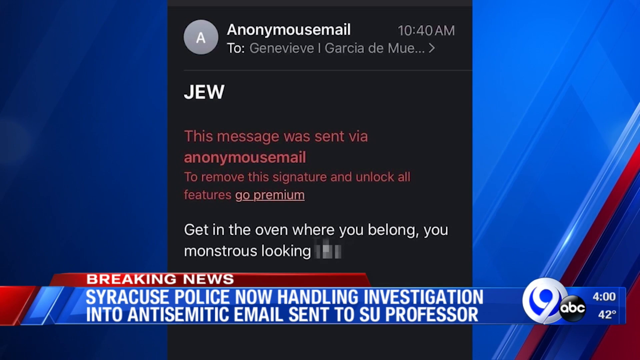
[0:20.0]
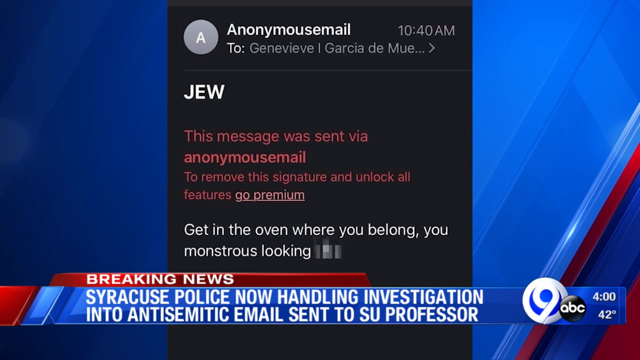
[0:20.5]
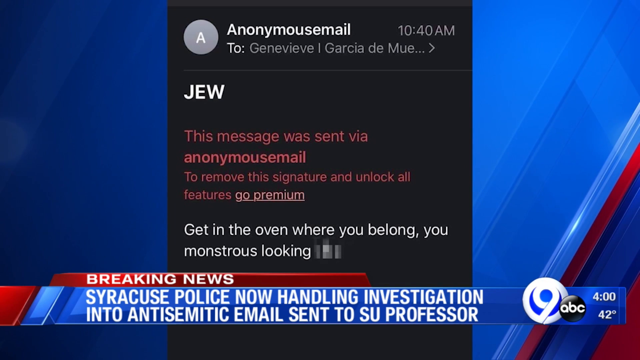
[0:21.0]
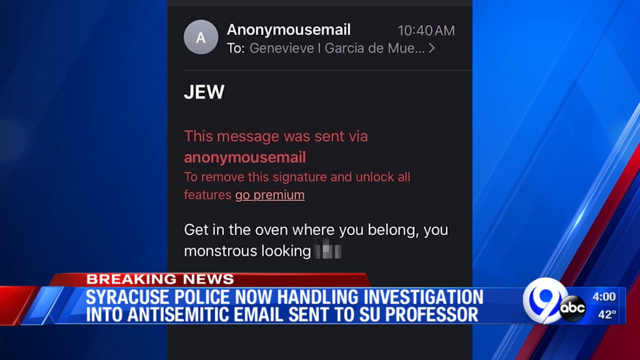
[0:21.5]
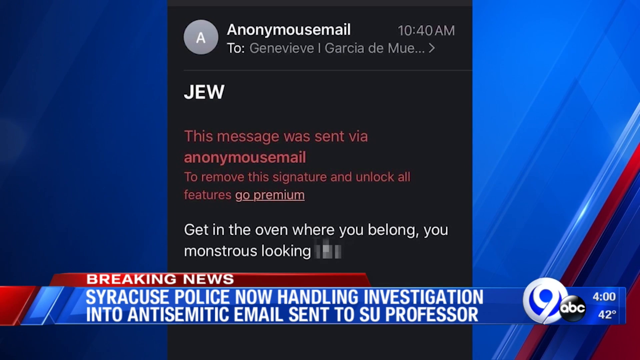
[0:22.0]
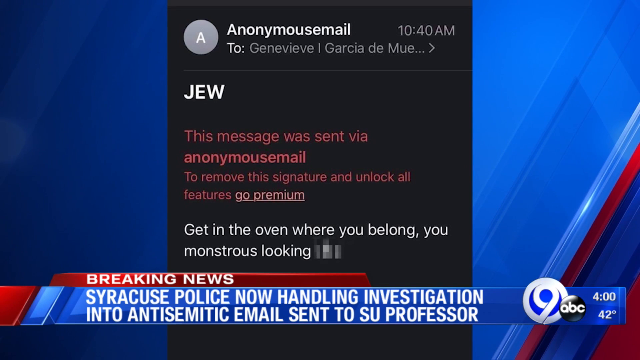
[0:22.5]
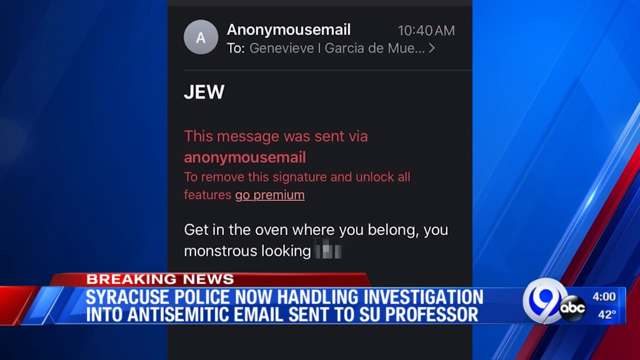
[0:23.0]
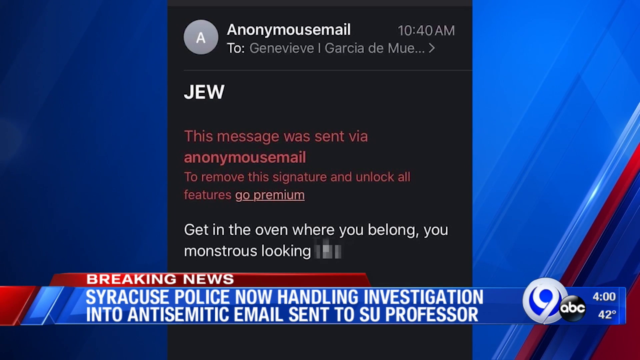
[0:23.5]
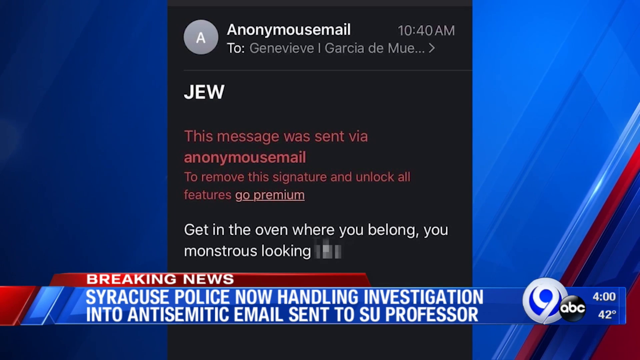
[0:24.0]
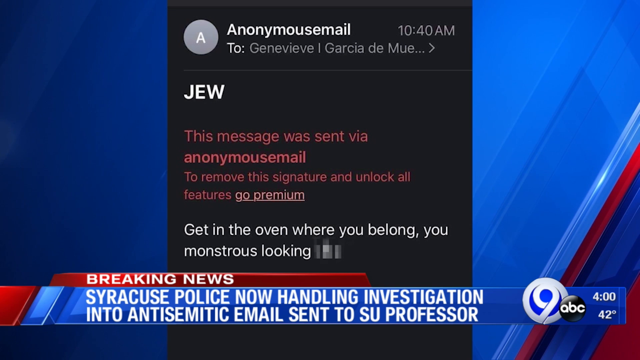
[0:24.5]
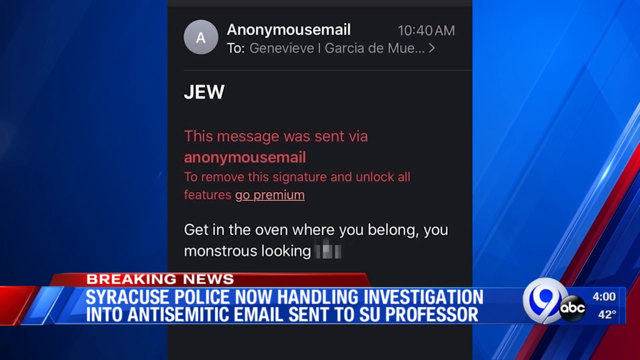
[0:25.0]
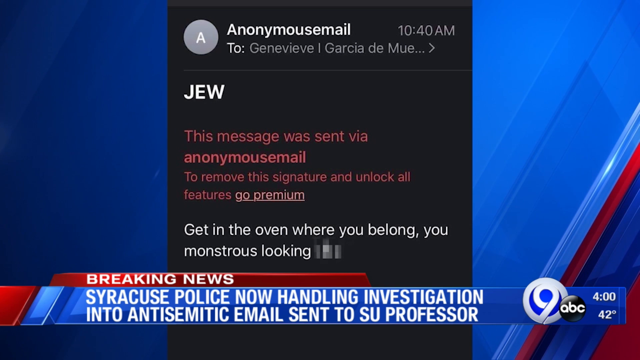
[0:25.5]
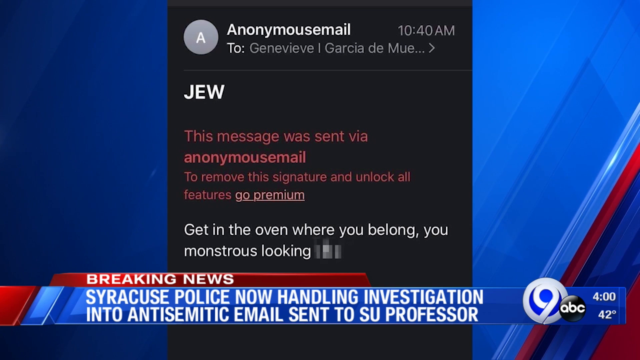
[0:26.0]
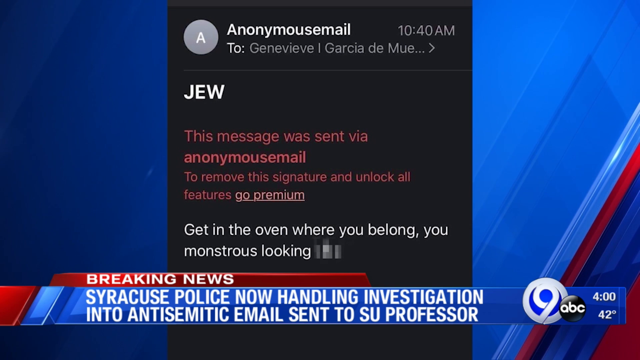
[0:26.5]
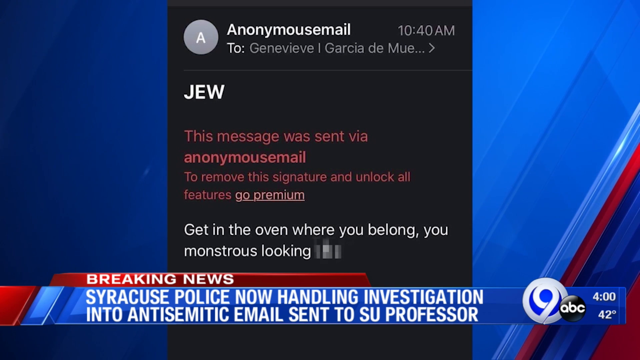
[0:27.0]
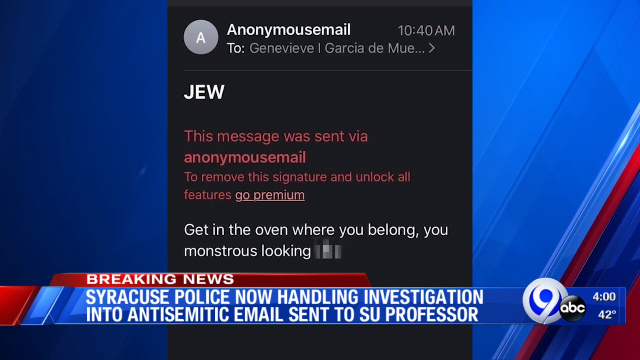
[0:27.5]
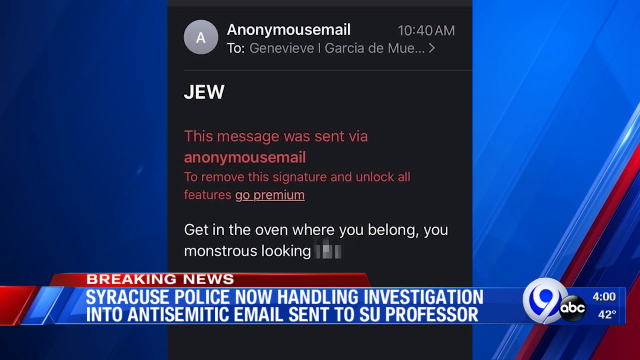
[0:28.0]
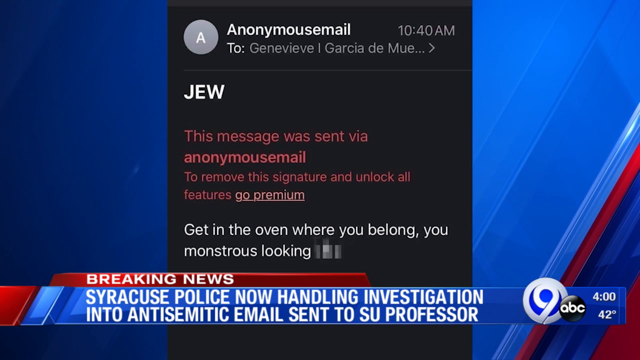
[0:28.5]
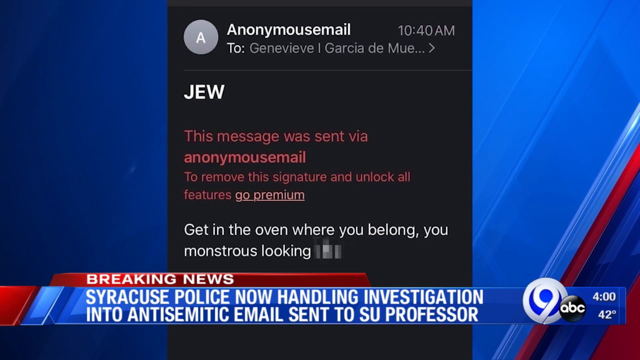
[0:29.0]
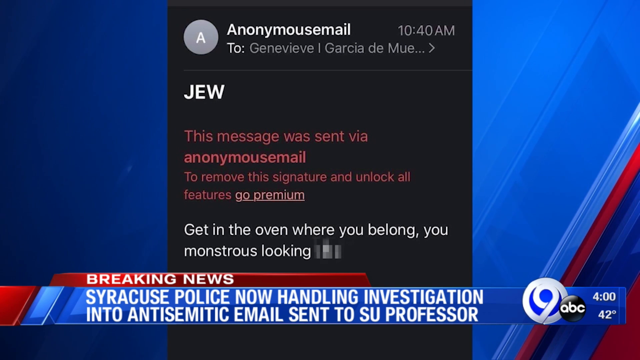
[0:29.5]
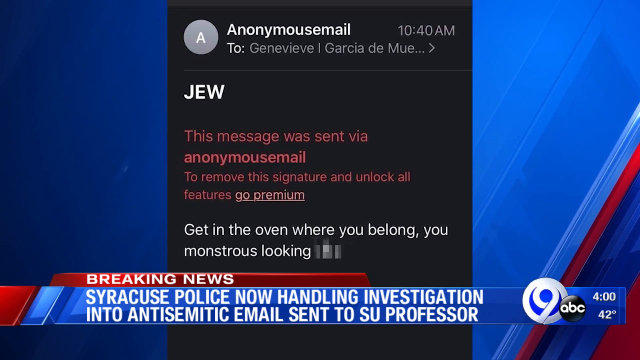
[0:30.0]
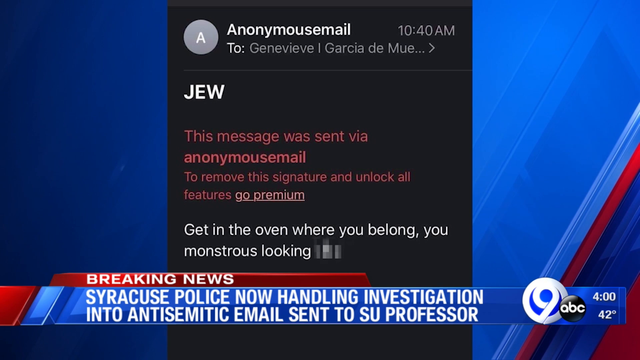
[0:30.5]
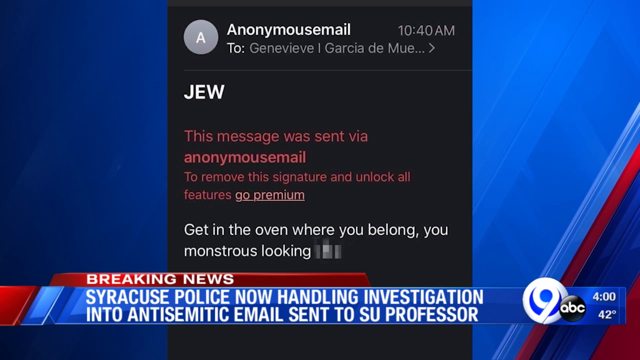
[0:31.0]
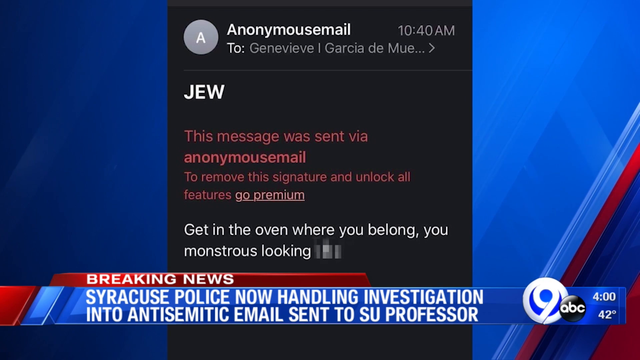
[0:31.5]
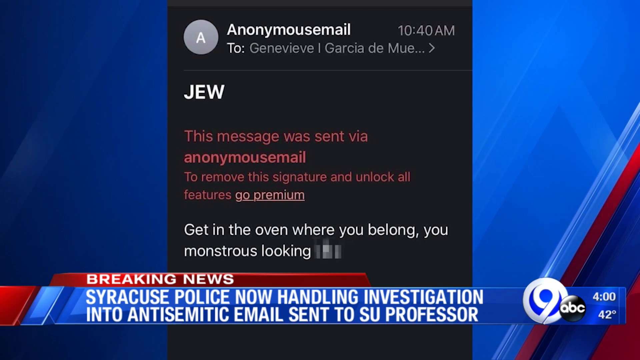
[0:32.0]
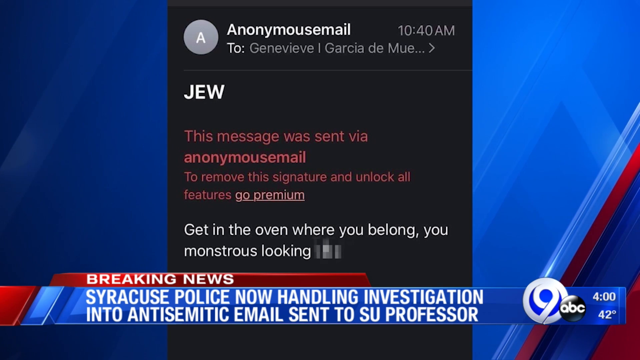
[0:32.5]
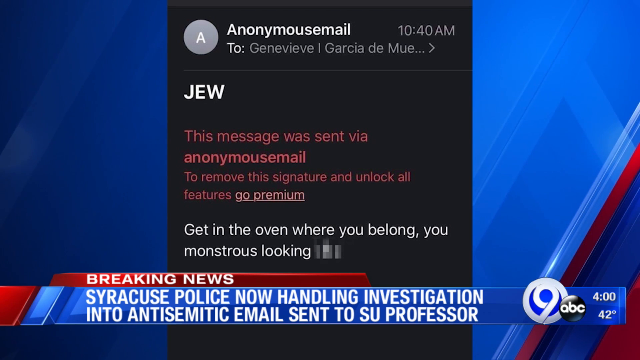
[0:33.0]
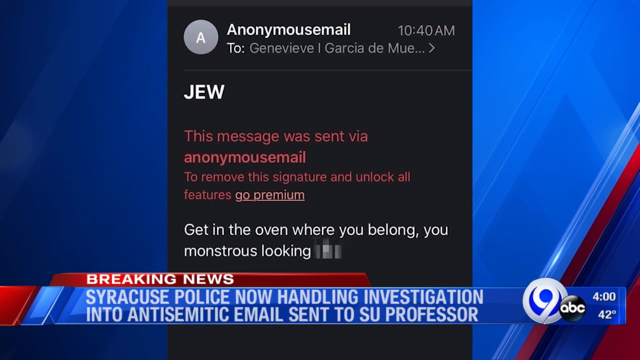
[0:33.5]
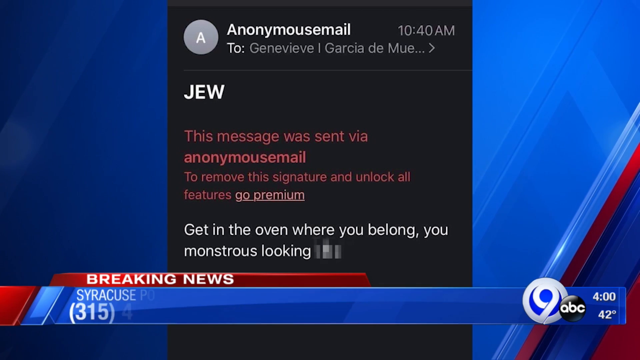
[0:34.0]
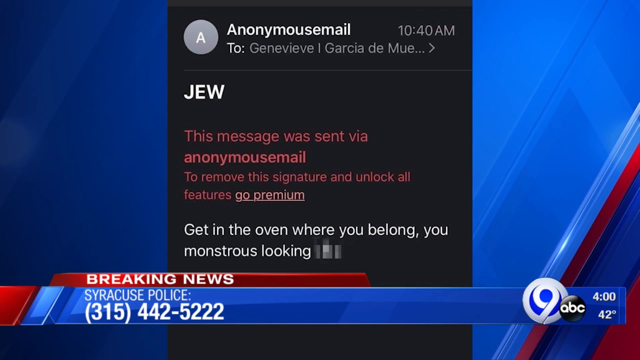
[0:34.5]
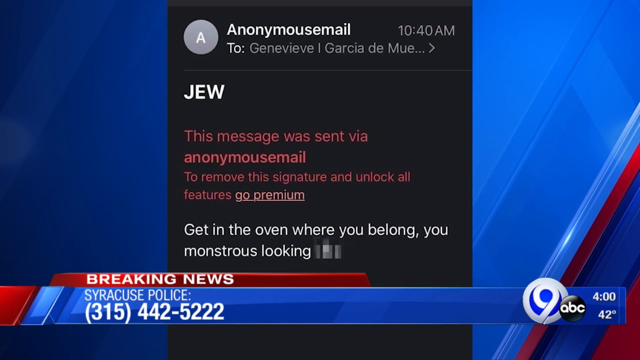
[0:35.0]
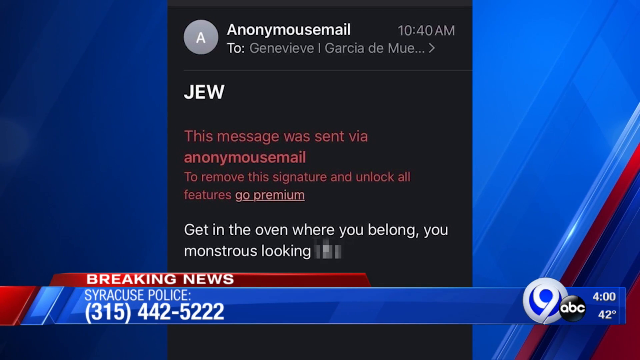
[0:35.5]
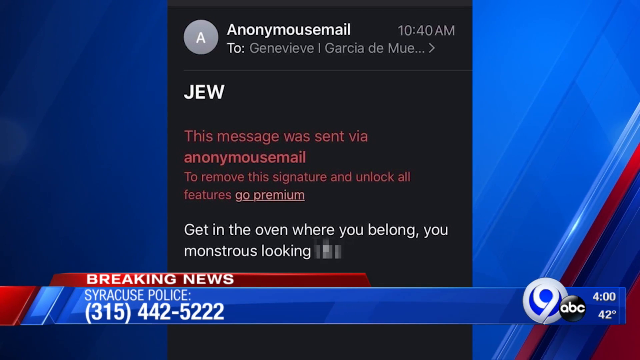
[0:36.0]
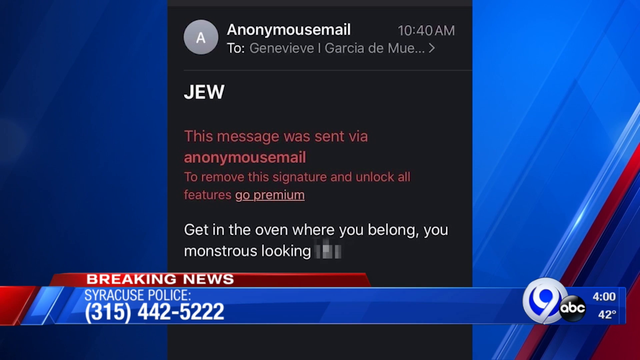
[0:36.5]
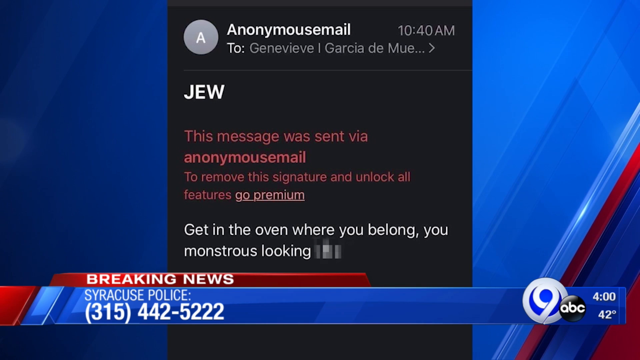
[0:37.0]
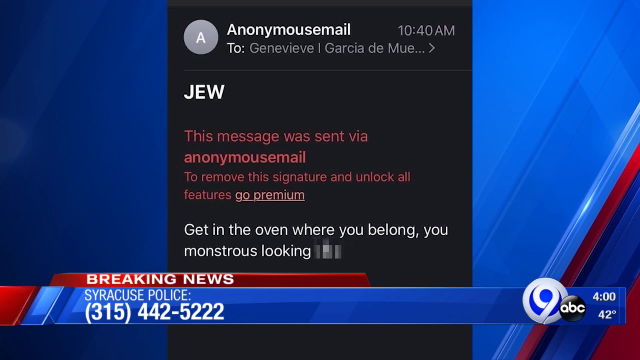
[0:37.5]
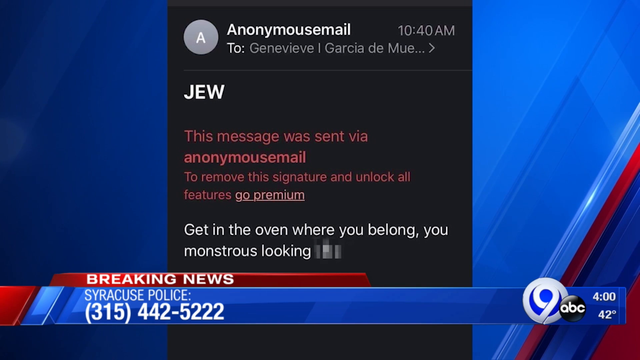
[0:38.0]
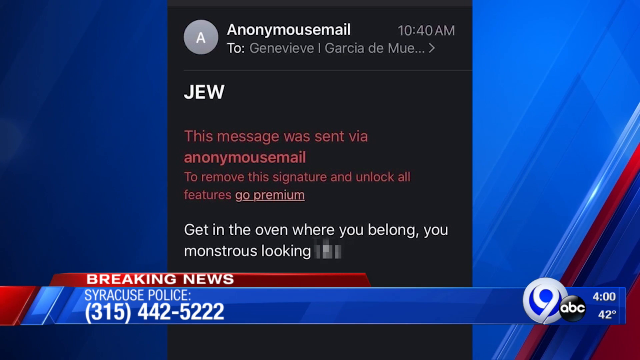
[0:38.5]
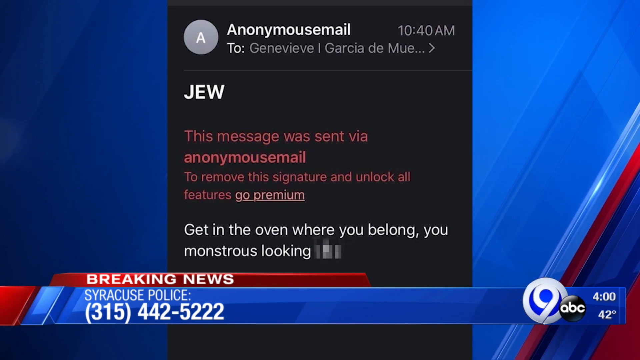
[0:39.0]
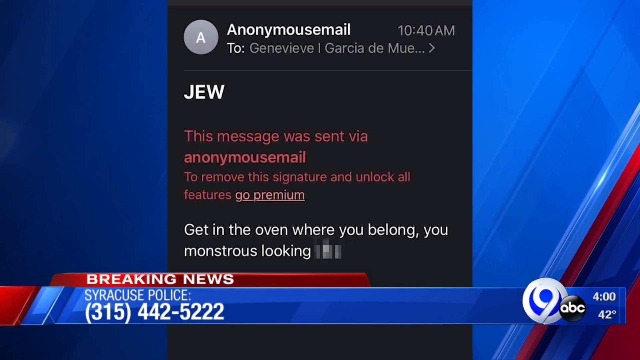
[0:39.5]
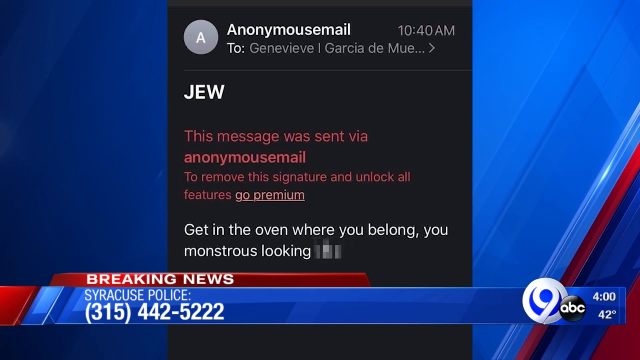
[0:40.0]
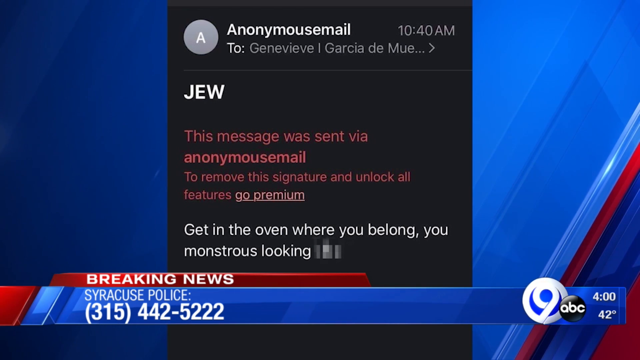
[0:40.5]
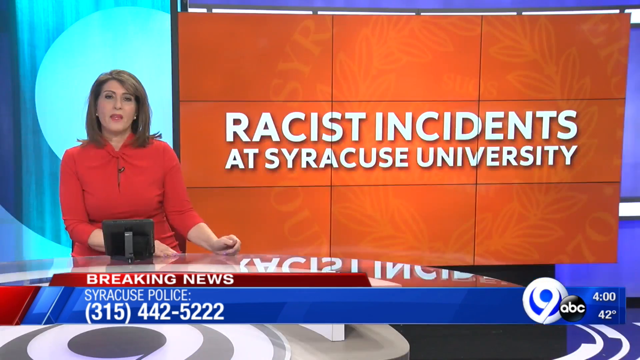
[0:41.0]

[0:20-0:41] The Channel 9 news logo, from an ABC affiliate, is in the lower right corner of the screen. A text bar across the bottom of the screen reads "Breaking news, Syracuse police now handling investigation into anti-Semitic email." An email message sent to someone is displayed on screen. It is addressed just to "Jew" in capital letters, and the message reads "Get in the oven where you belong, you monstrous looking," followed by a word that is airbrushed out. The text in the bar at the bottom of the screen changes to read "Syracuse police: 315-442-5222." The scene briefly changes back to a female presenter in a news studio, standing behind a desk with a large video display behind her that reads "Racist incidents at Syracuse University."